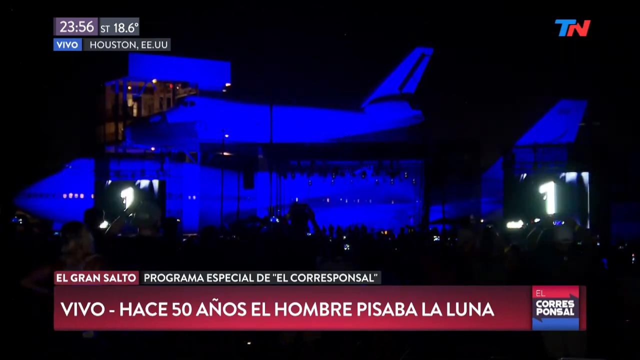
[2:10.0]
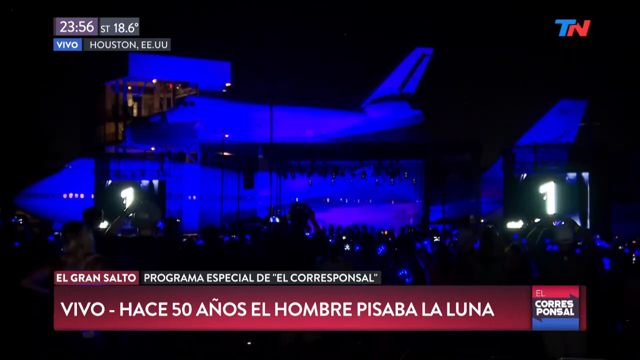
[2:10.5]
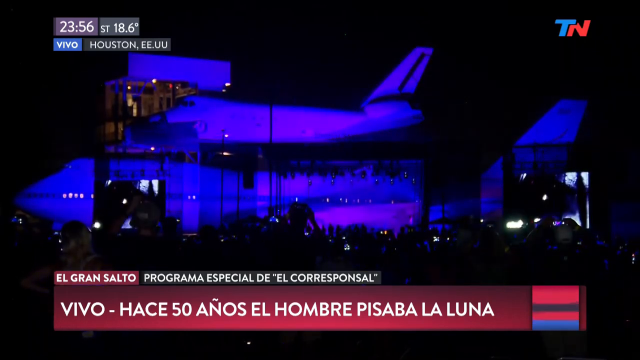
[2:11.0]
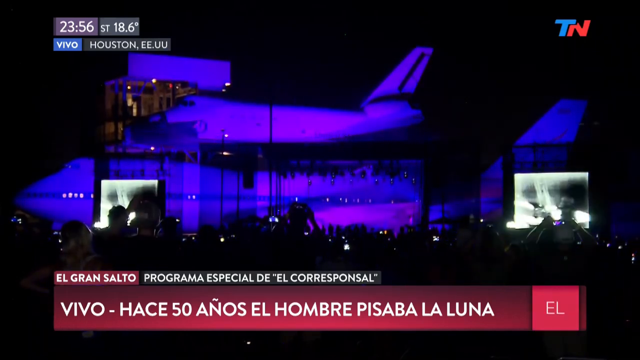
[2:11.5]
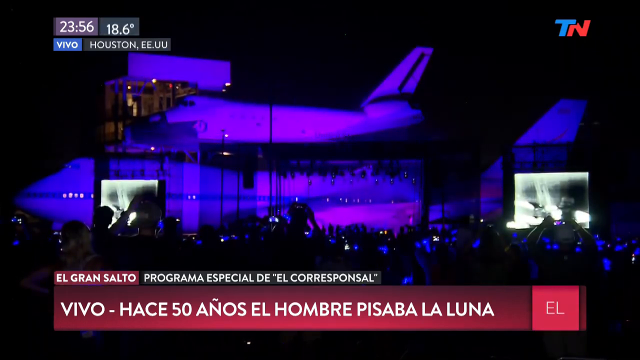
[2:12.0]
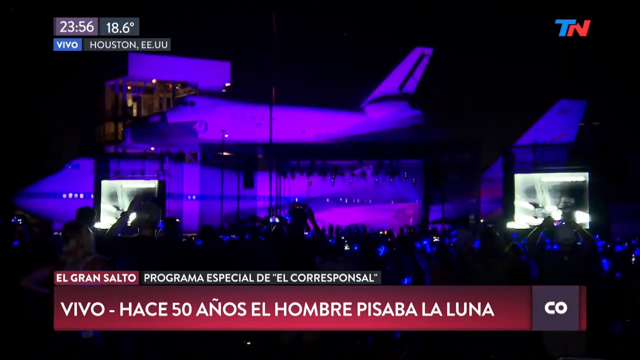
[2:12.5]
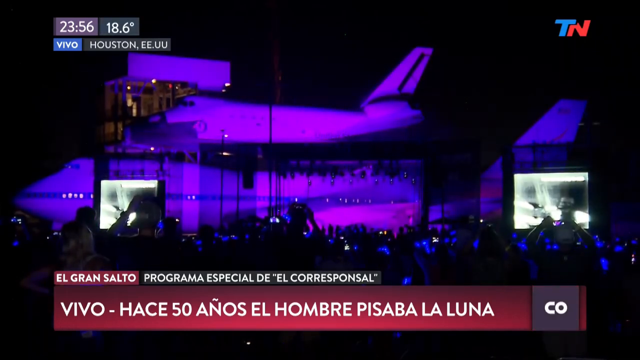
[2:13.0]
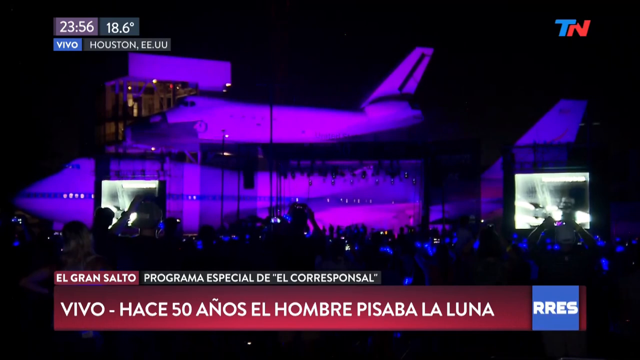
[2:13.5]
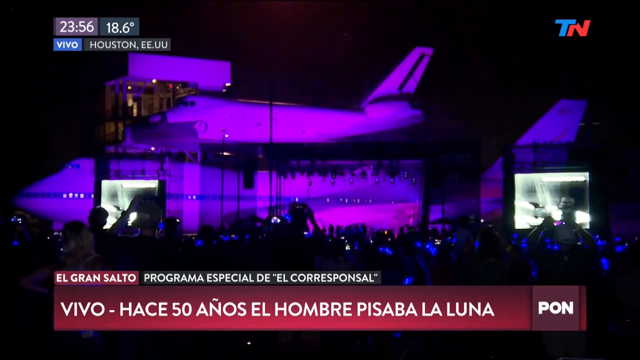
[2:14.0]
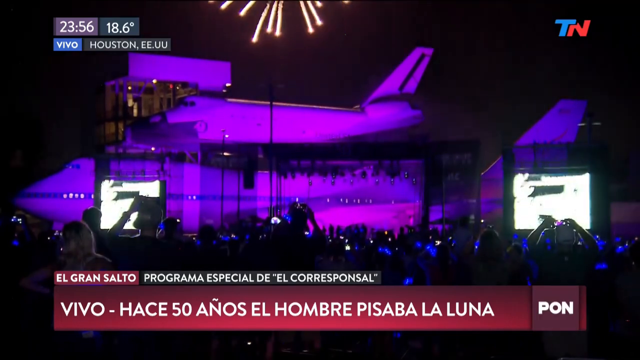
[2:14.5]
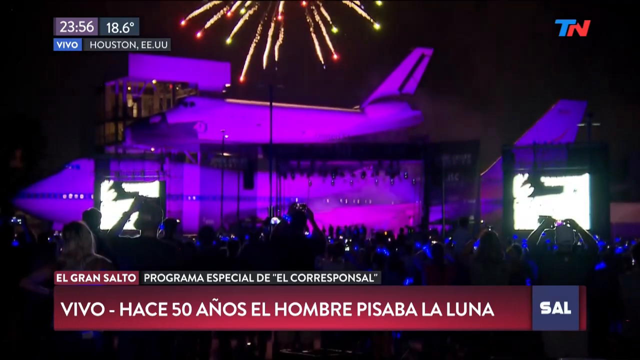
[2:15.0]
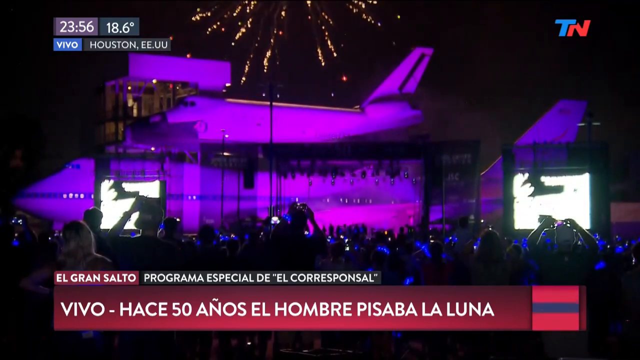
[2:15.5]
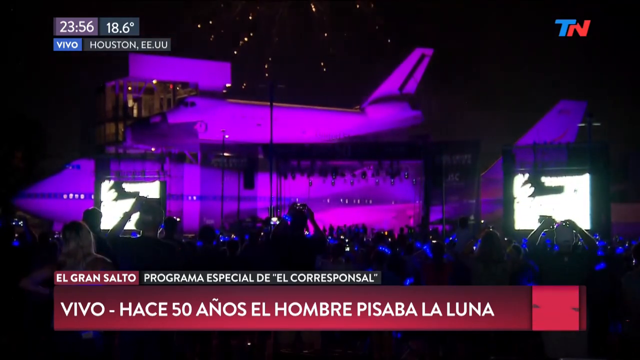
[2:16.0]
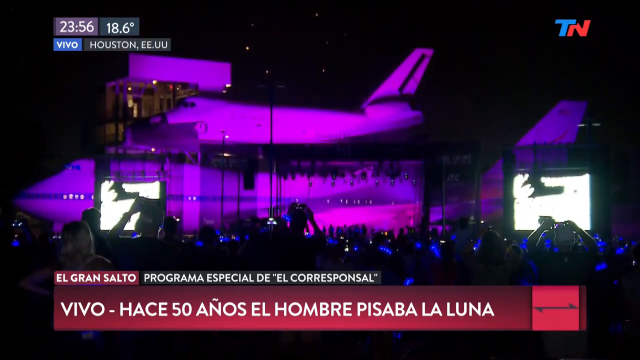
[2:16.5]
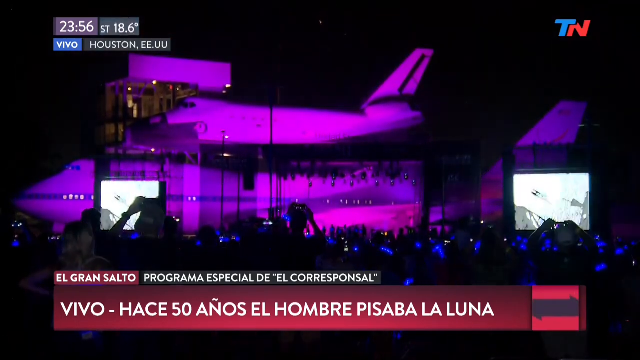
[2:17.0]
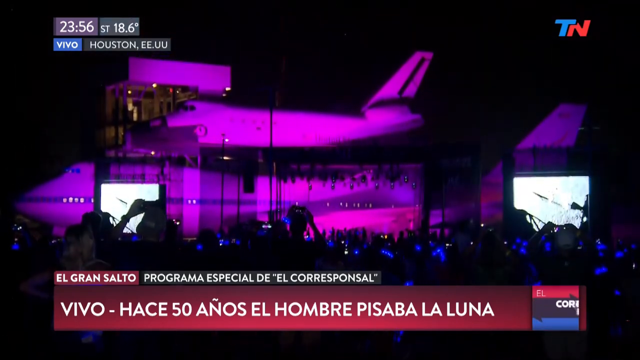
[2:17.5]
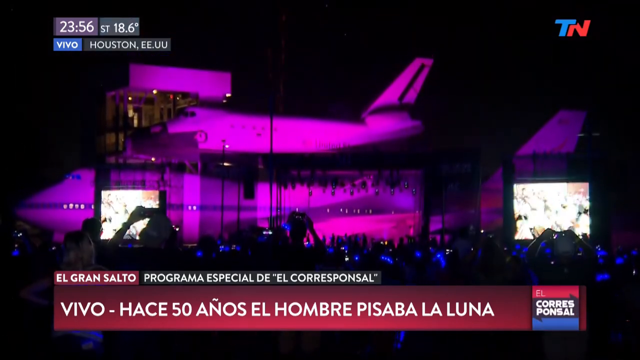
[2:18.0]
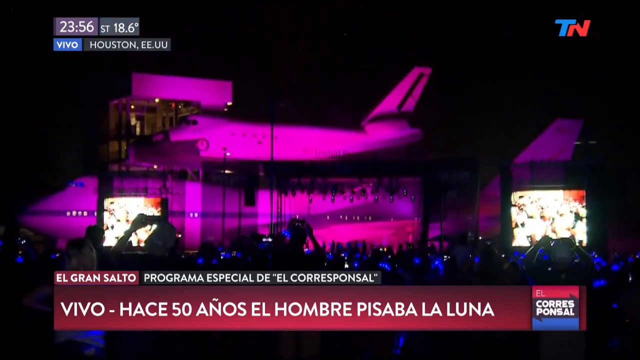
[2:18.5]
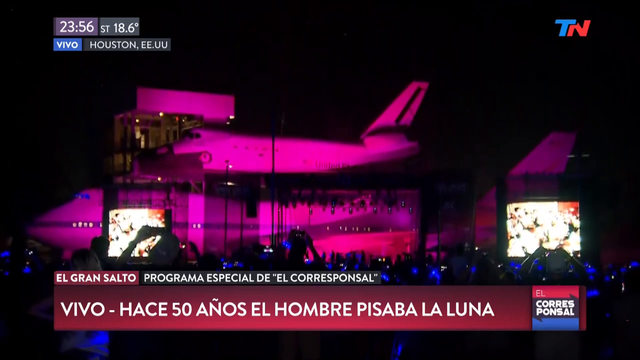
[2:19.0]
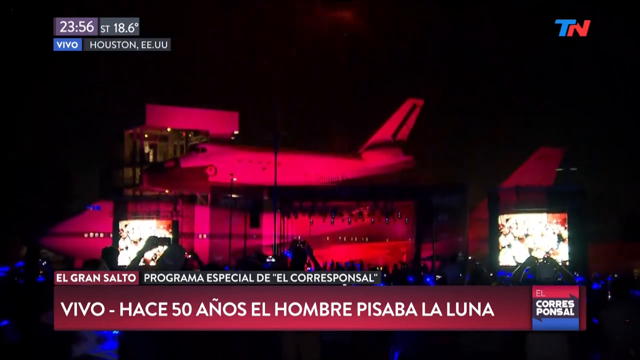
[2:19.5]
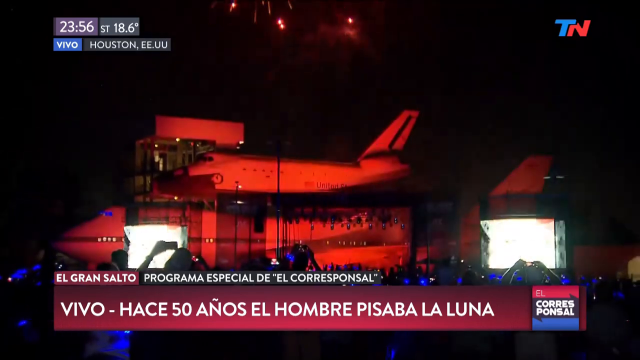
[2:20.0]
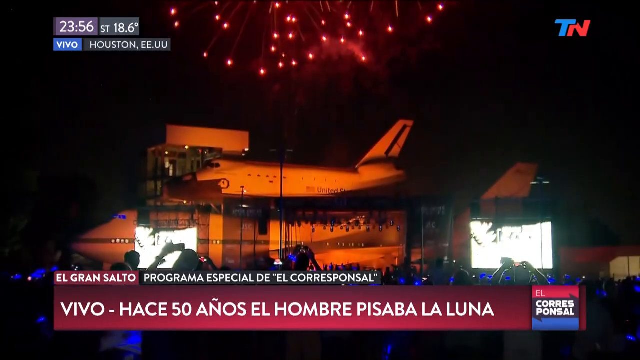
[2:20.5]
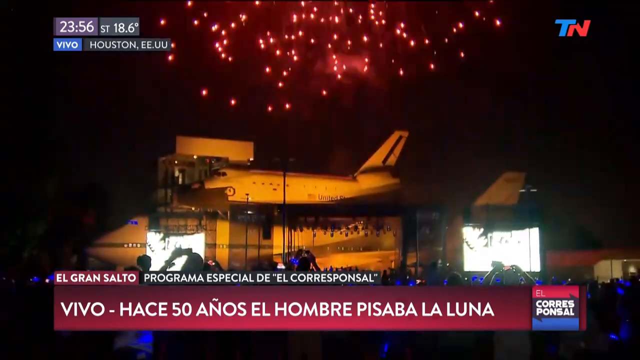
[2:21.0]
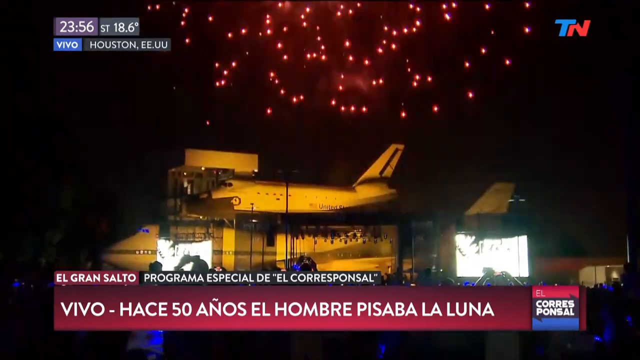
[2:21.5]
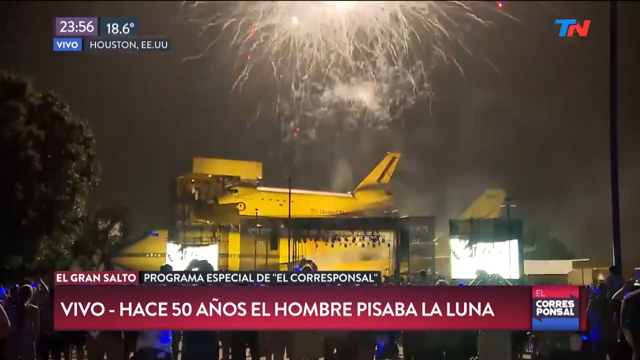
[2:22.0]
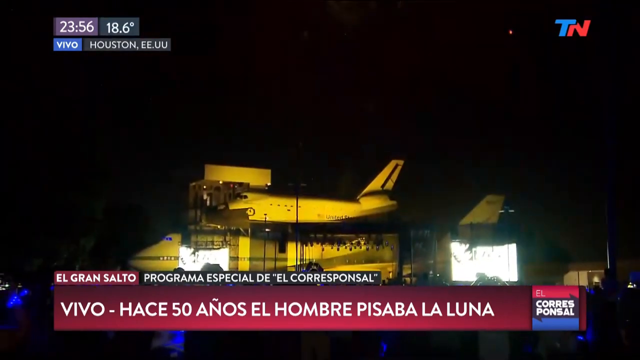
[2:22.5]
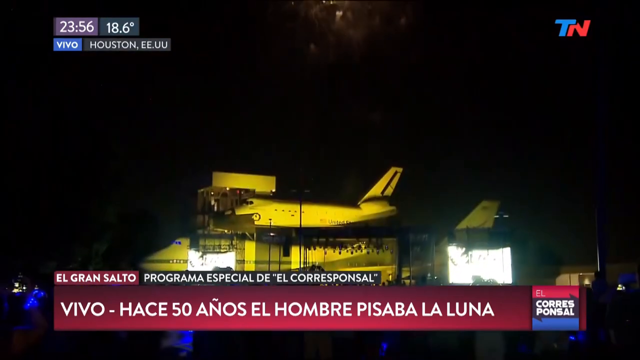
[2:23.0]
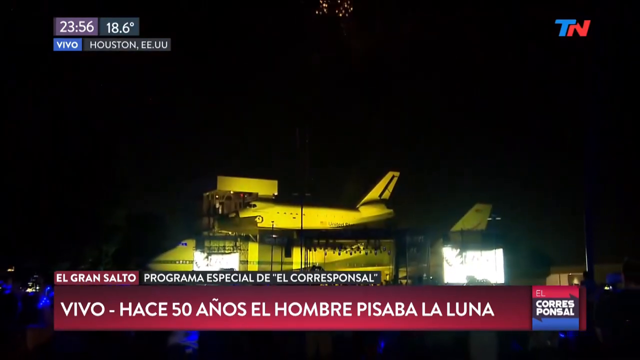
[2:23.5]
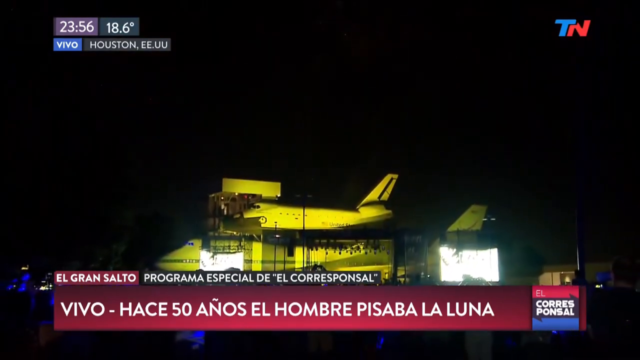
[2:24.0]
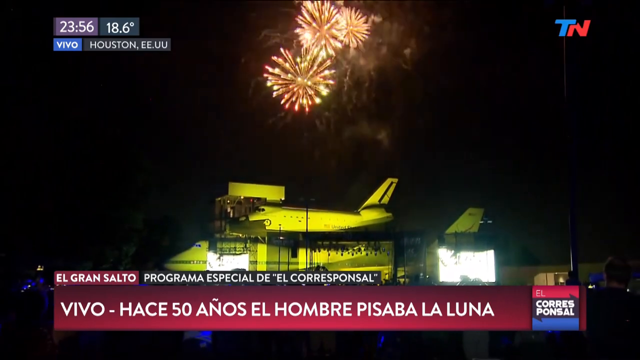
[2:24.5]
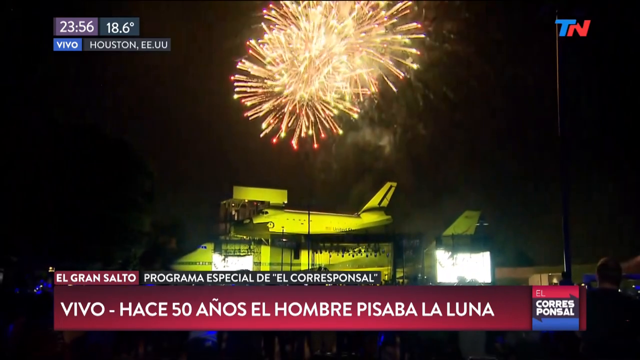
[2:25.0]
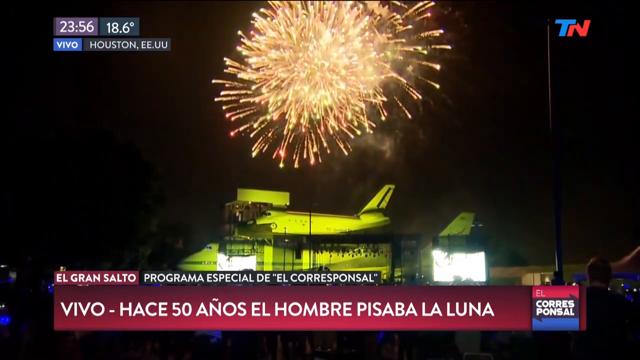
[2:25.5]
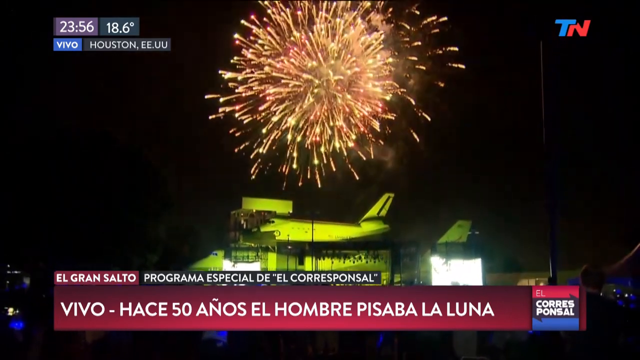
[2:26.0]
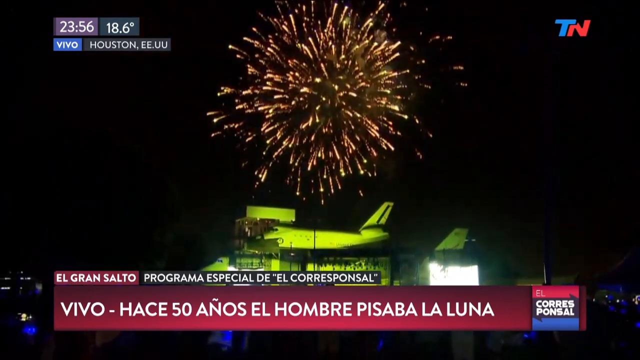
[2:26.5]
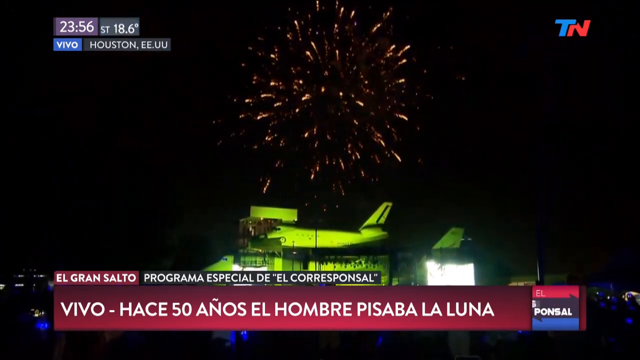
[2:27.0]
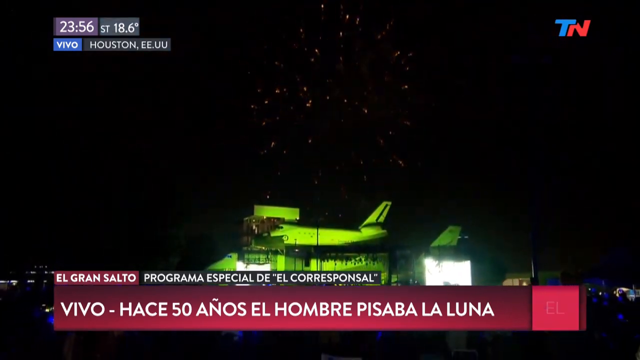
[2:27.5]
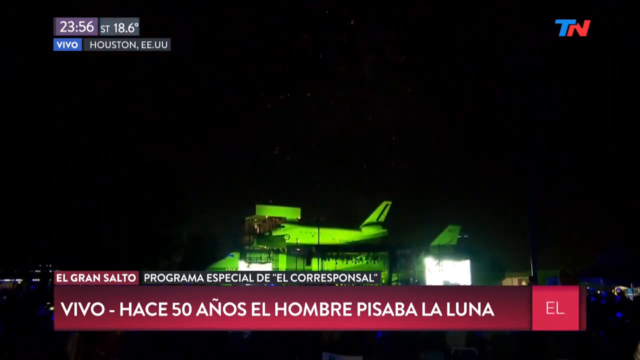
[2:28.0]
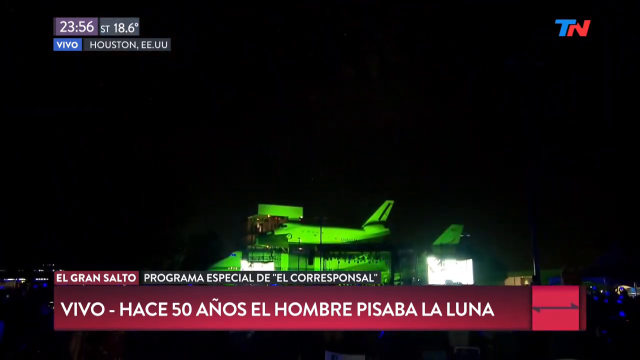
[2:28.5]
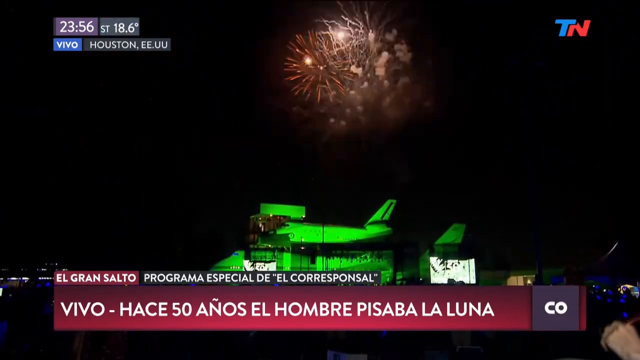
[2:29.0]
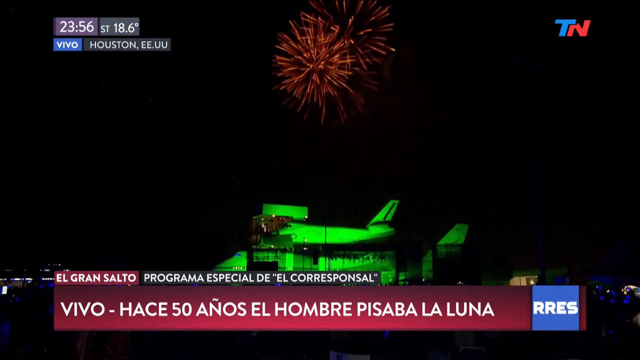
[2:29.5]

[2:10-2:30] The timer is up, and a new timer seems to appear on the screen. People look at the sky as many fireworks go off, filling the sky with tons of bursts. People hold their cameras up to the sky to record the fireworks.